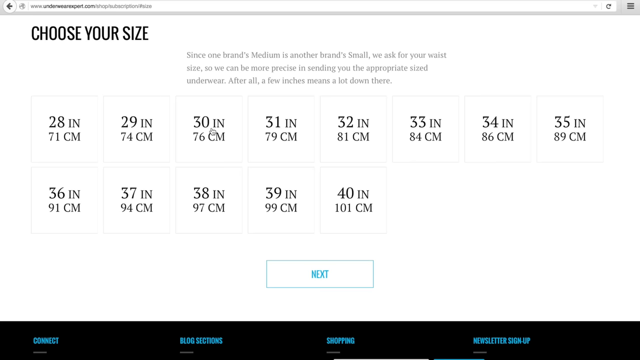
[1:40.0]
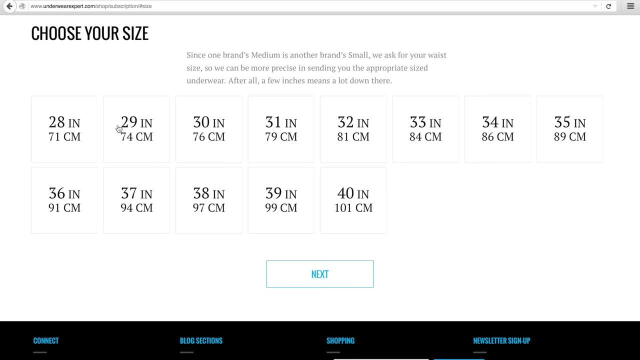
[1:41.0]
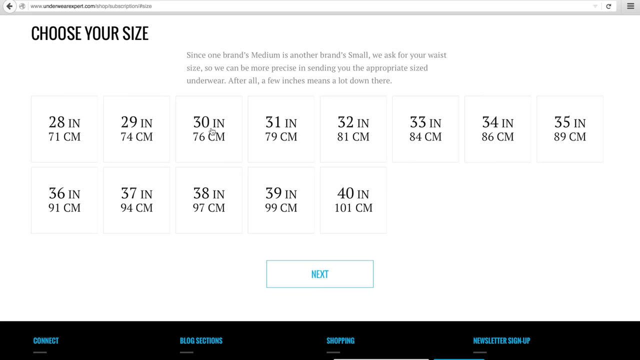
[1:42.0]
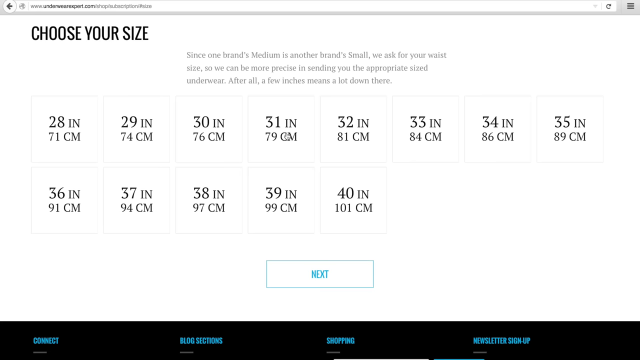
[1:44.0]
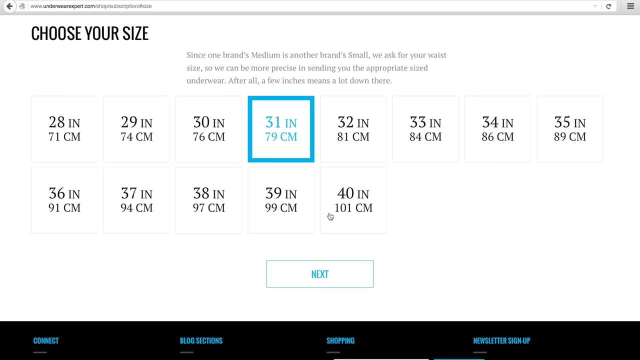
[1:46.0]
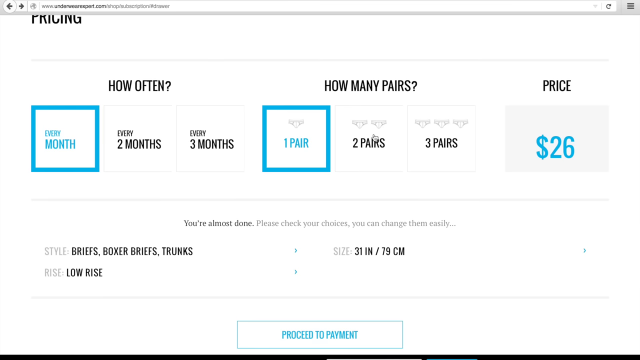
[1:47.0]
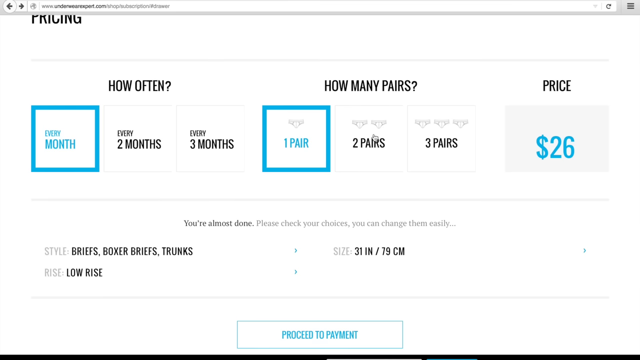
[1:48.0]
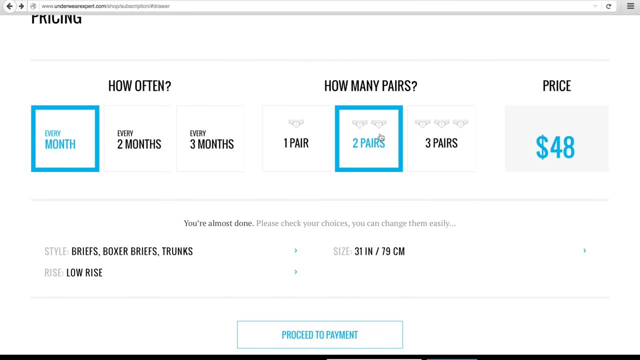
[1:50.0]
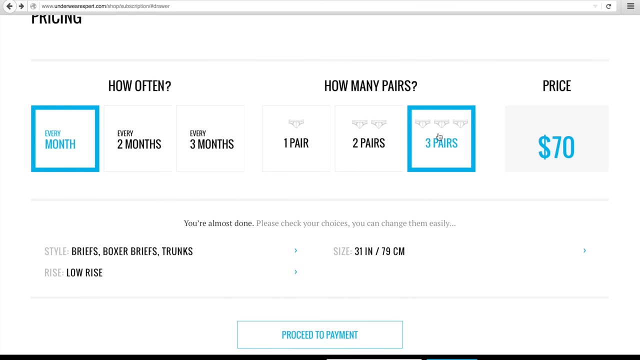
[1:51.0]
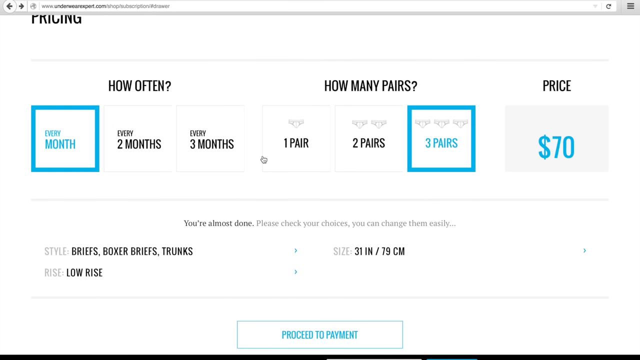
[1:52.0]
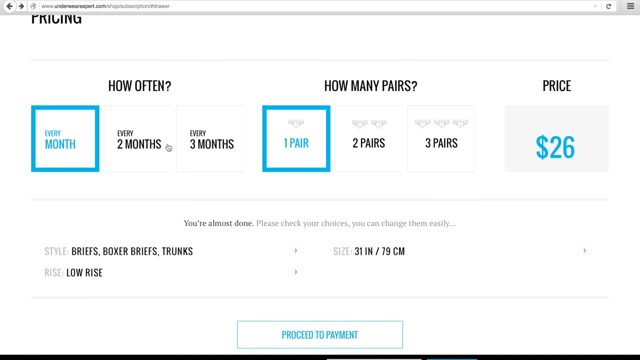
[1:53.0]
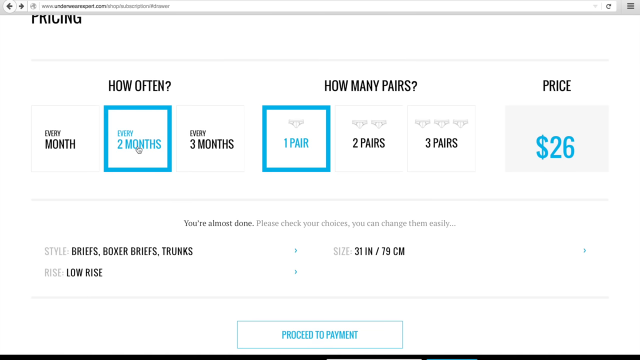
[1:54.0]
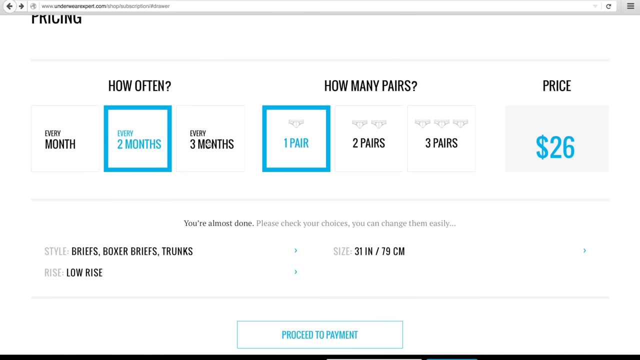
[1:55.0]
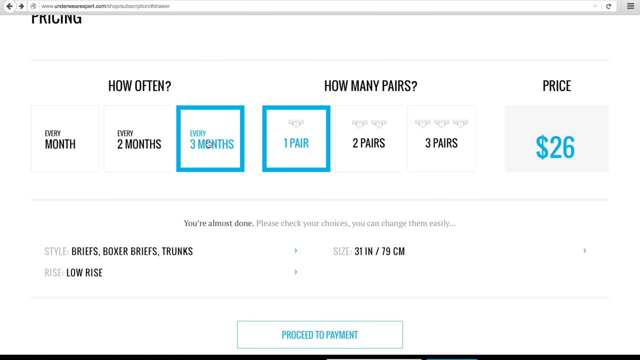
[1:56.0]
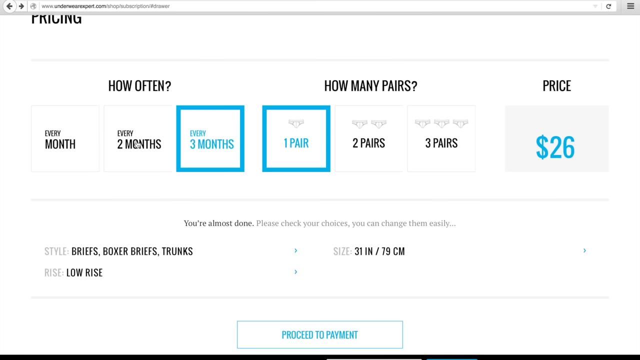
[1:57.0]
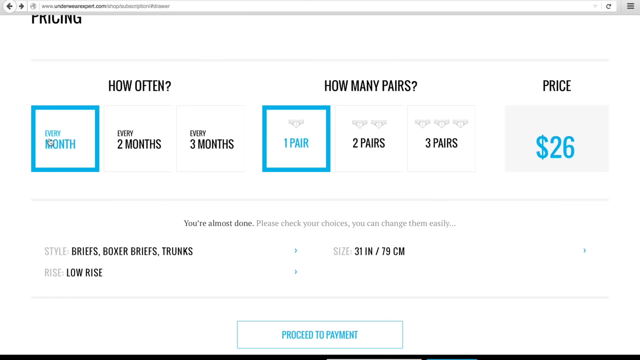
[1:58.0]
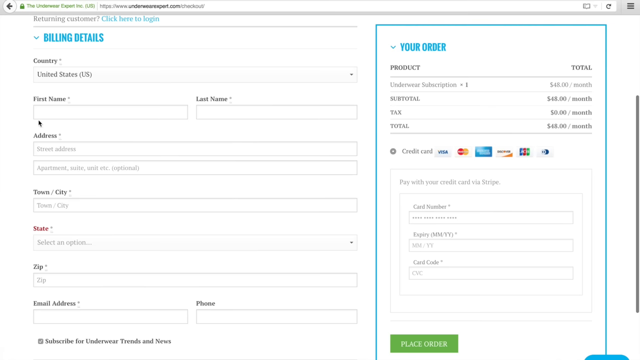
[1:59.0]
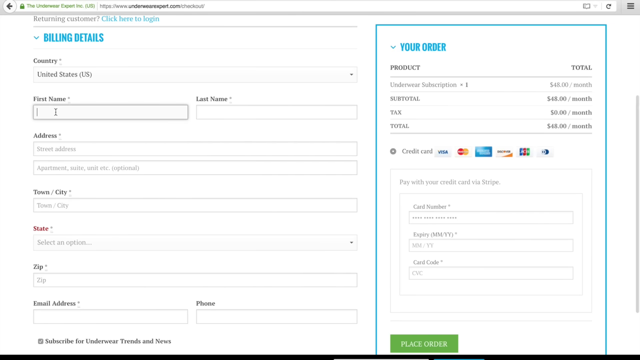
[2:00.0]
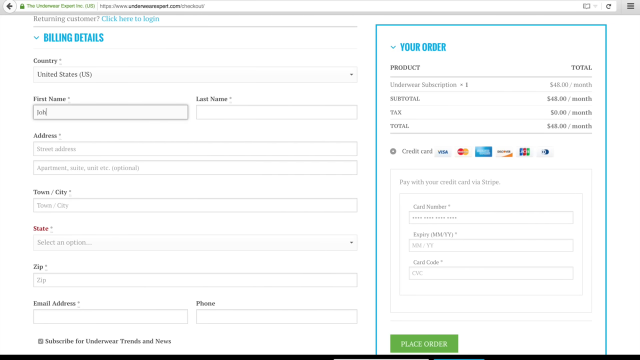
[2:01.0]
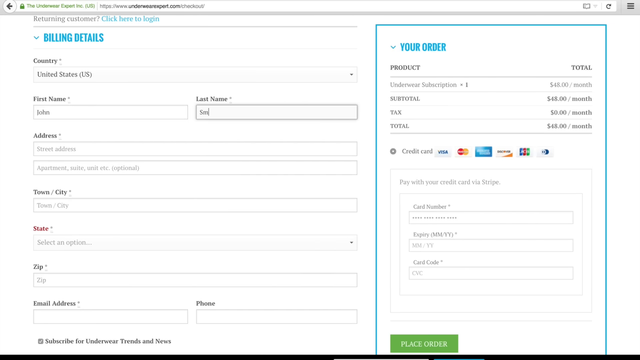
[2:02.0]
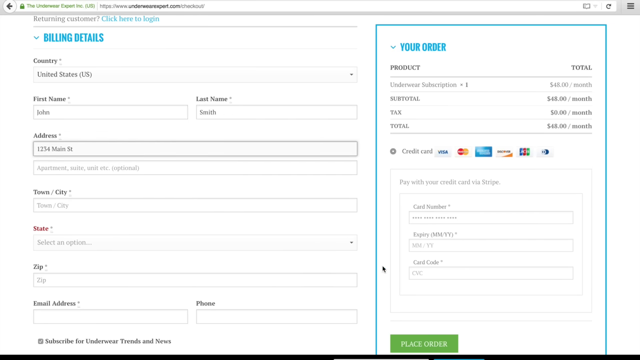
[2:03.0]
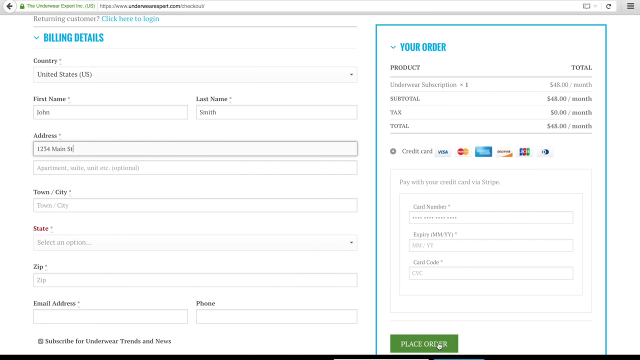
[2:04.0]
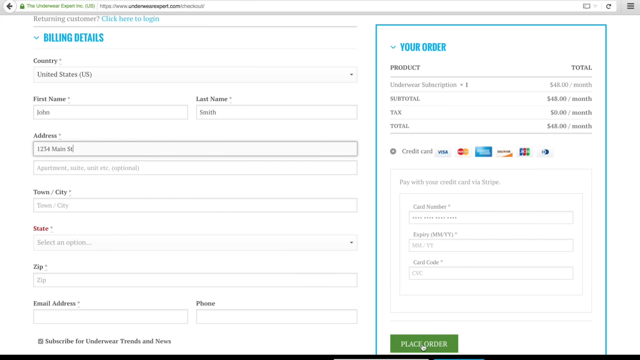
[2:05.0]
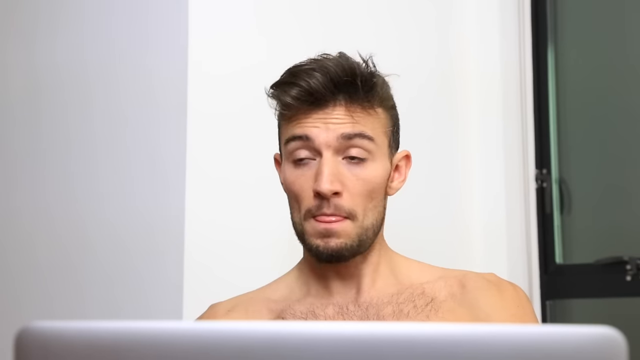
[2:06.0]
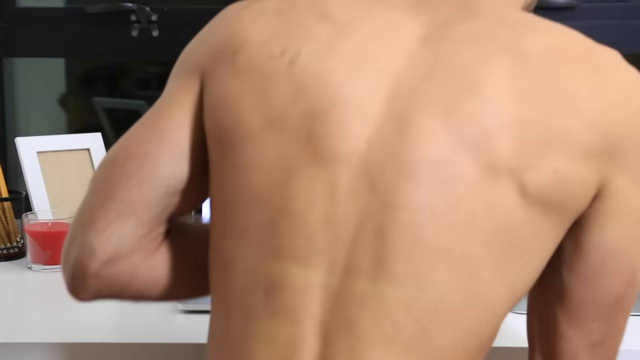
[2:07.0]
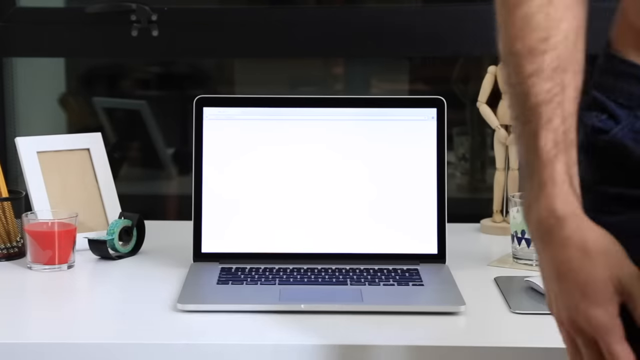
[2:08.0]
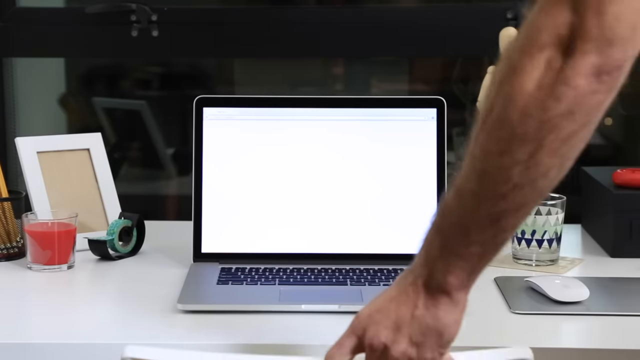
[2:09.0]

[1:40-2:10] A page on the man's laptop has a caption reading "choose your size" and a description that reads "if one brand medium is another brand small, we ask for your size so we can be more precise in sending you the appropriate size". Below it are measurements in inches and centimetres: 28 inches, written in centimetres as 71 centimetres, then 29, 30, 31, continuing up to a size written in centimetres as 101 centimetres. The cursor moves over the sizes. Another page then appears on the same laptop with the questions "how often" and "how many dollars" and a price tag with the word "price". The options "every month", "every two months" and "every three months" are shown, "one dollar" is highlighted, and the price is $26. The screens show how to navigate the platform and order underwear.